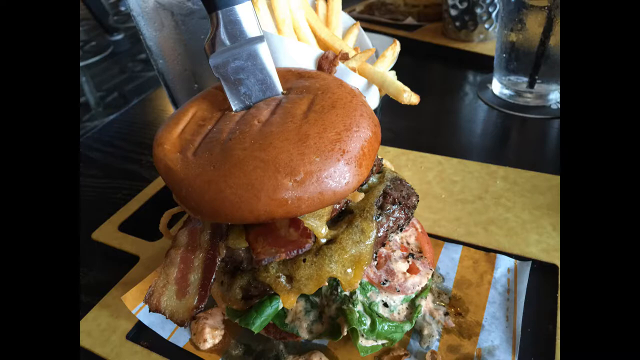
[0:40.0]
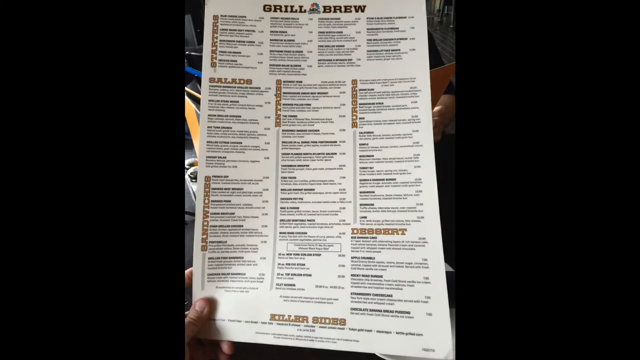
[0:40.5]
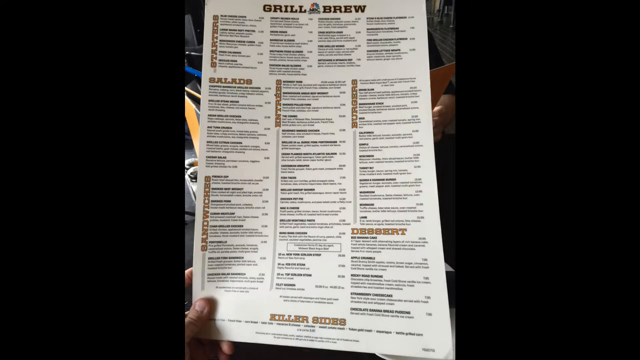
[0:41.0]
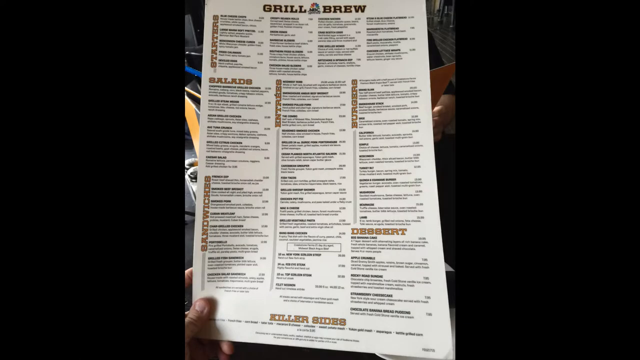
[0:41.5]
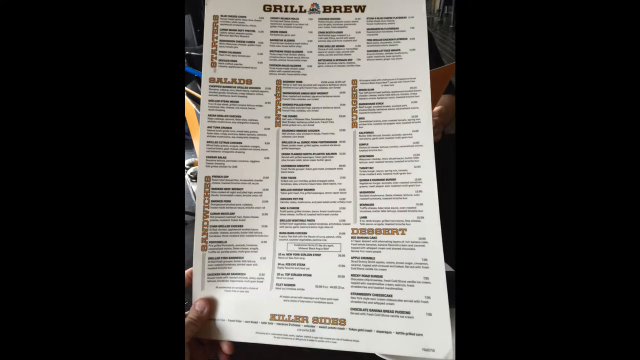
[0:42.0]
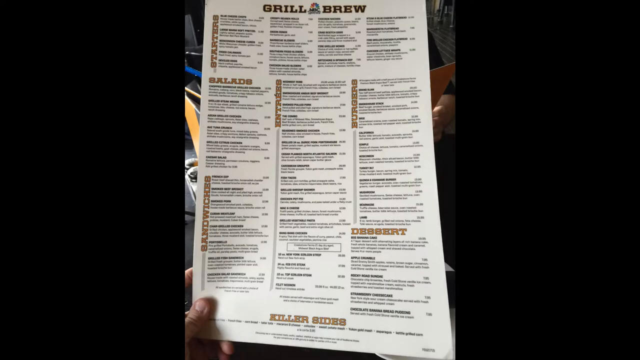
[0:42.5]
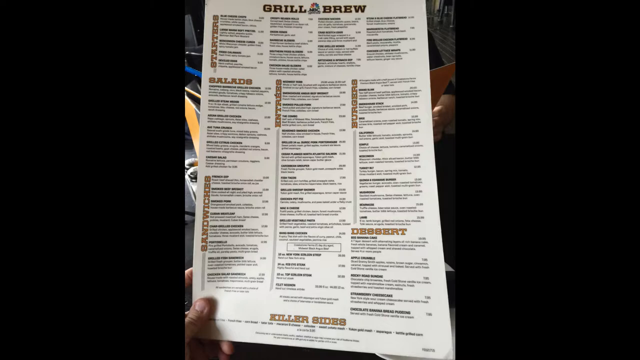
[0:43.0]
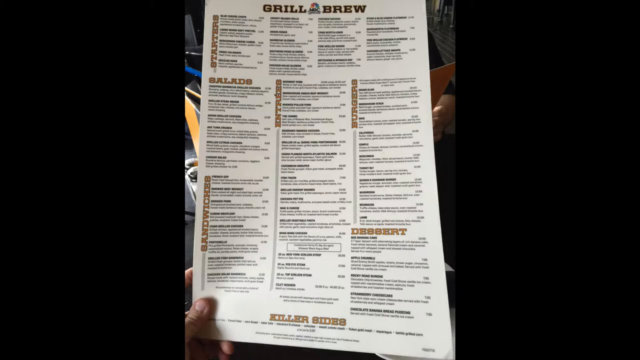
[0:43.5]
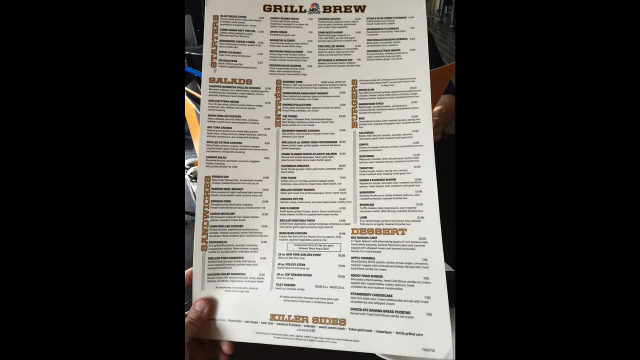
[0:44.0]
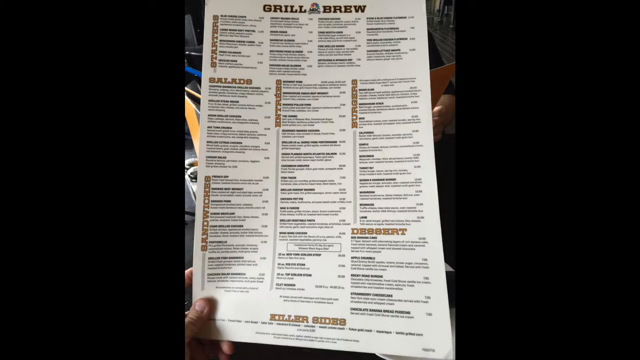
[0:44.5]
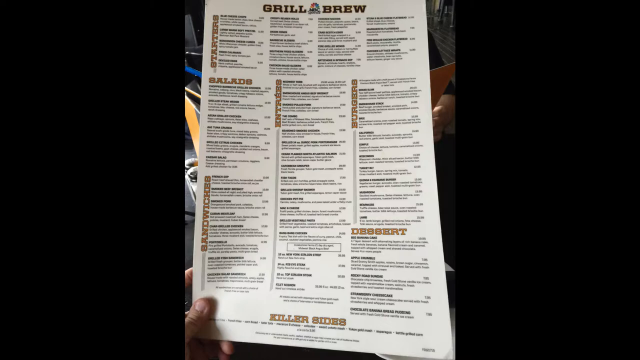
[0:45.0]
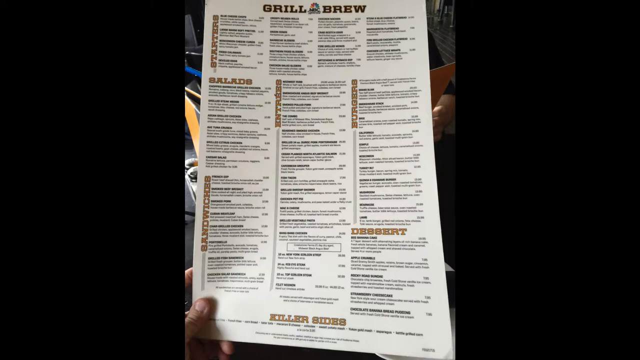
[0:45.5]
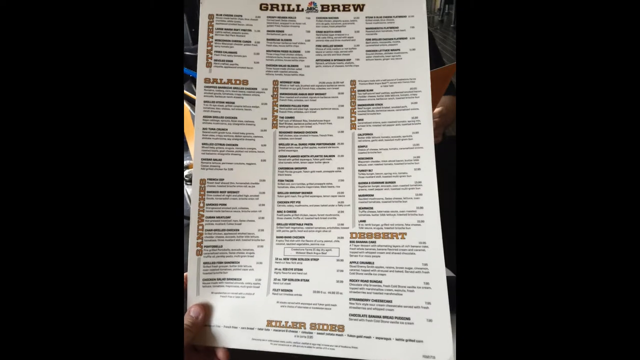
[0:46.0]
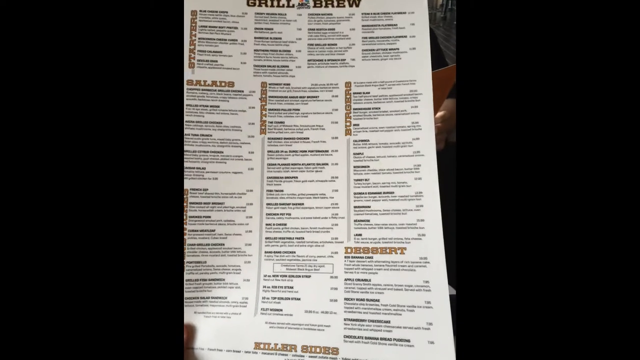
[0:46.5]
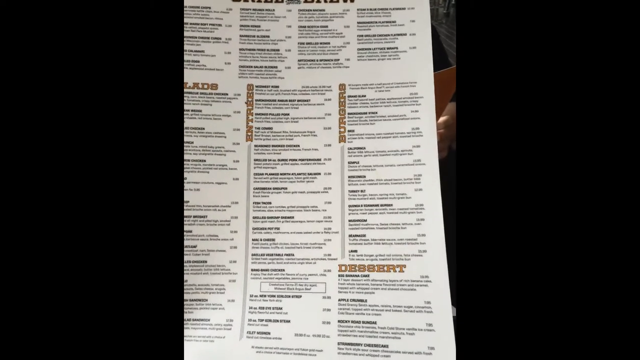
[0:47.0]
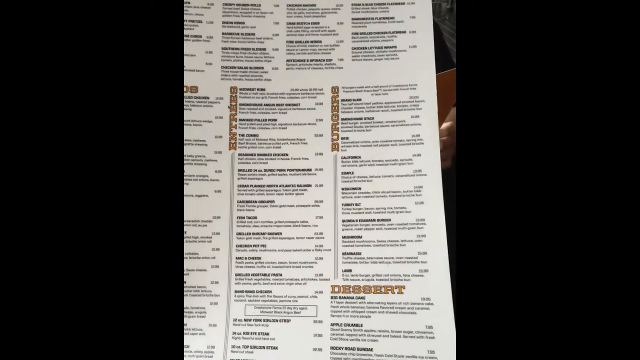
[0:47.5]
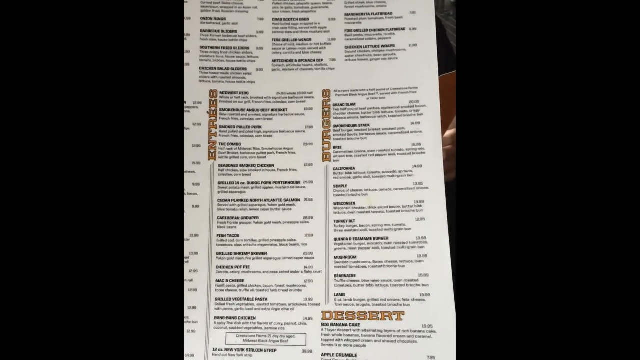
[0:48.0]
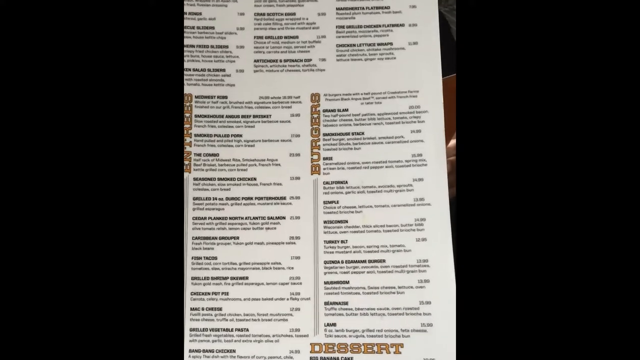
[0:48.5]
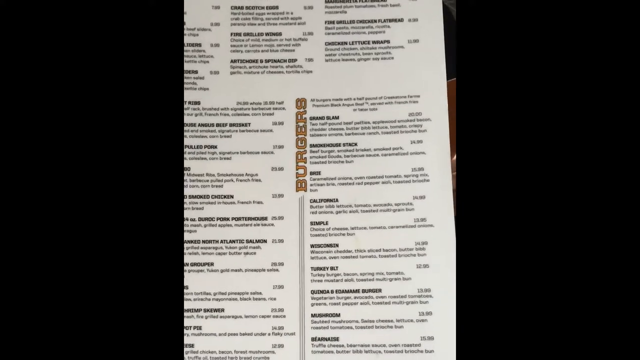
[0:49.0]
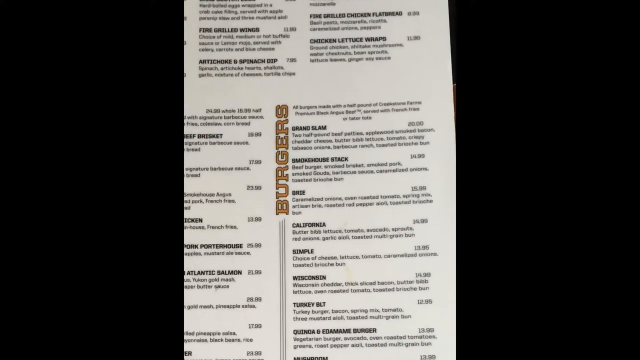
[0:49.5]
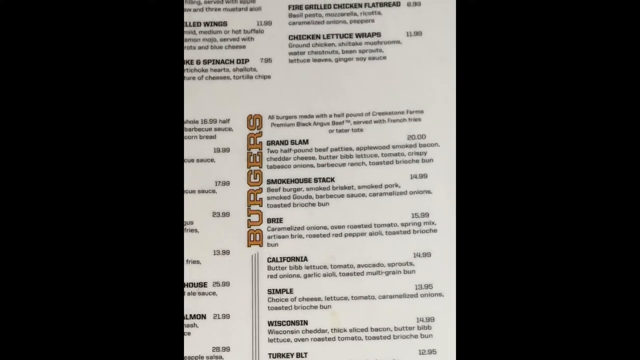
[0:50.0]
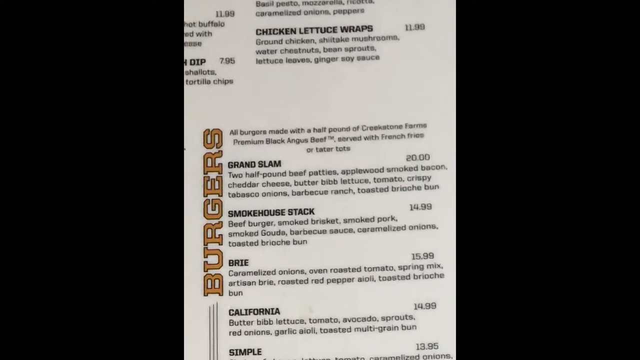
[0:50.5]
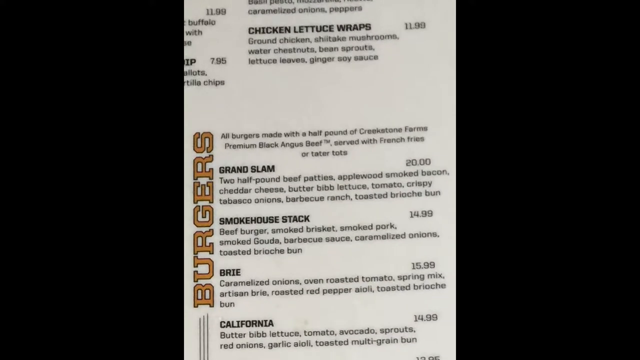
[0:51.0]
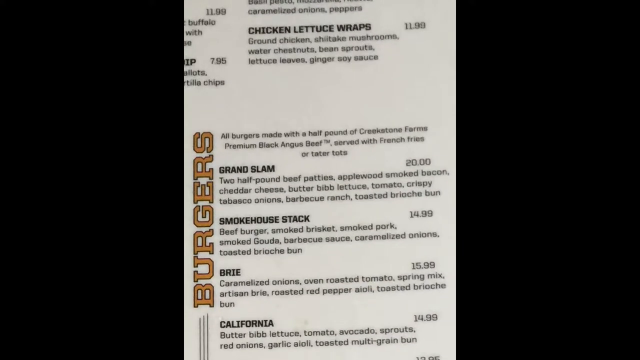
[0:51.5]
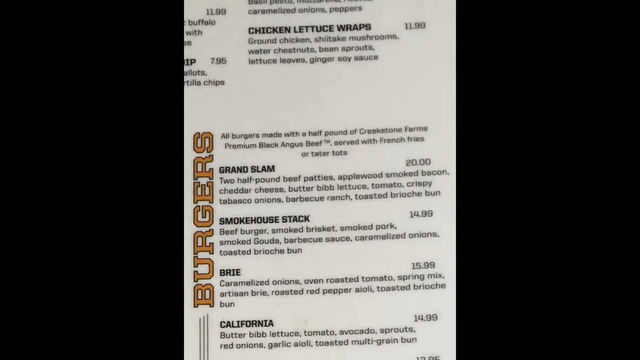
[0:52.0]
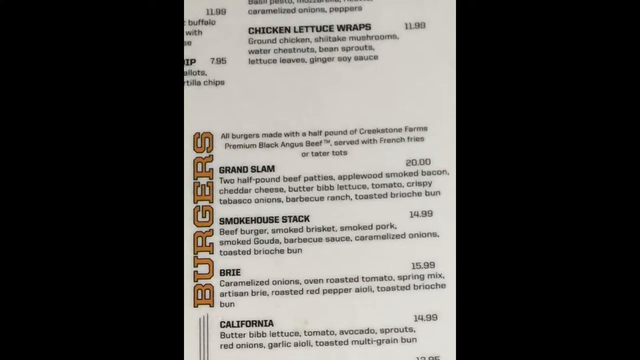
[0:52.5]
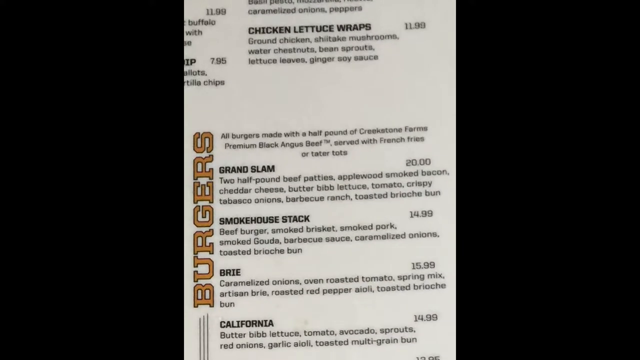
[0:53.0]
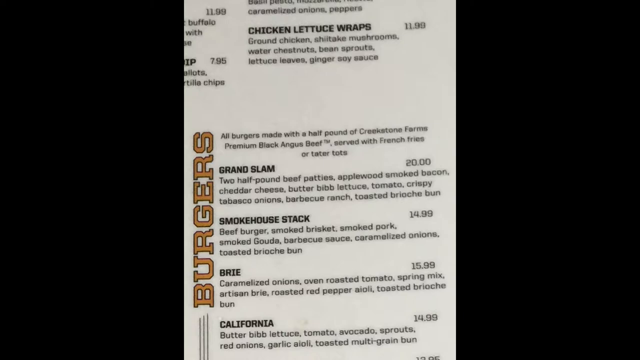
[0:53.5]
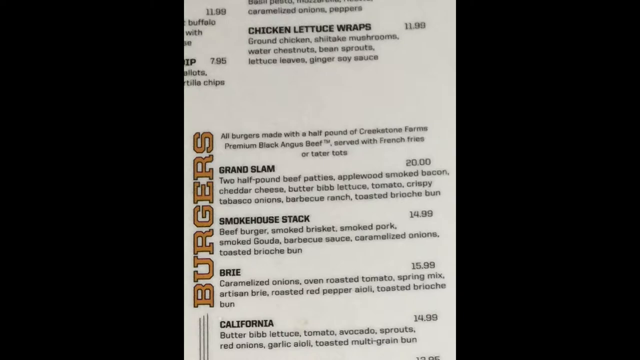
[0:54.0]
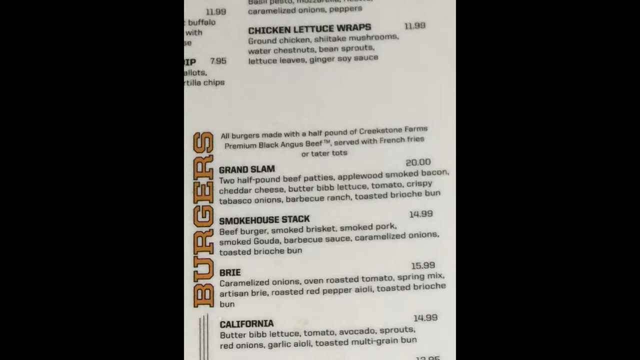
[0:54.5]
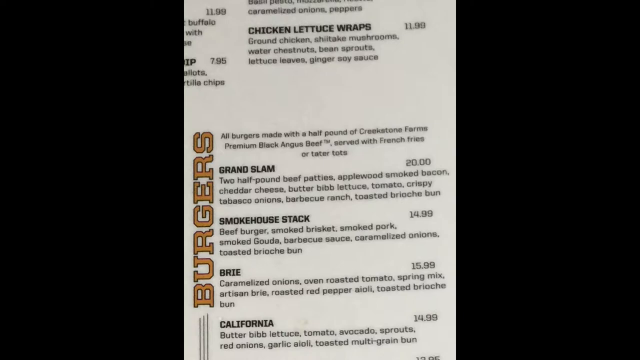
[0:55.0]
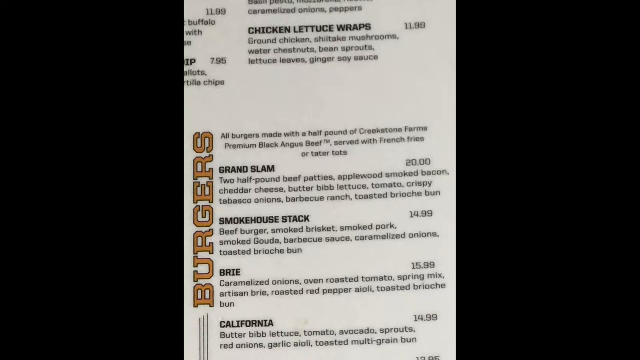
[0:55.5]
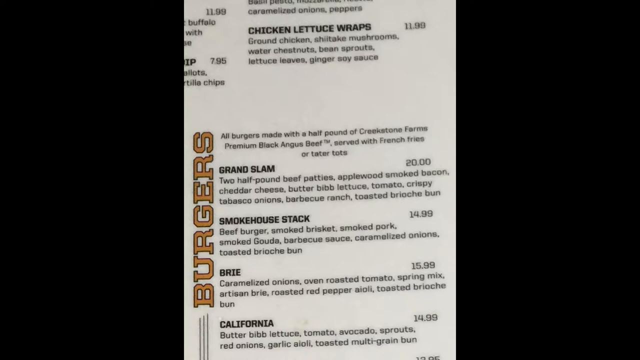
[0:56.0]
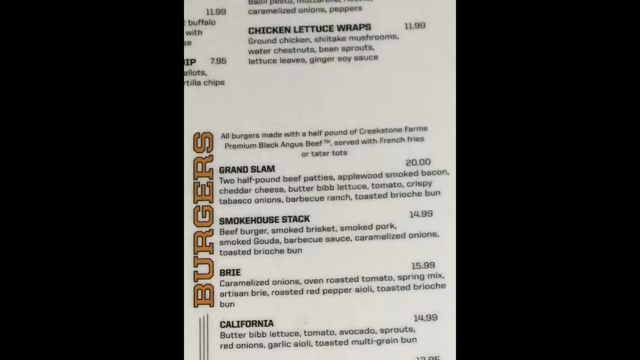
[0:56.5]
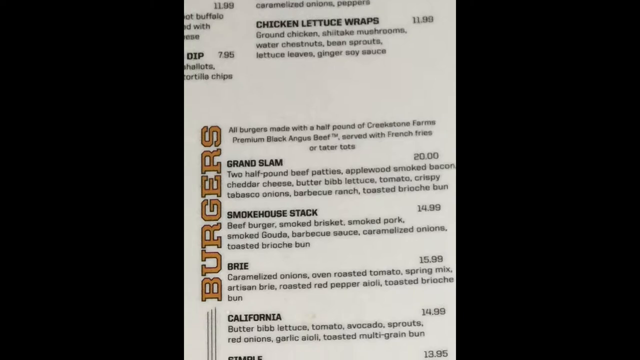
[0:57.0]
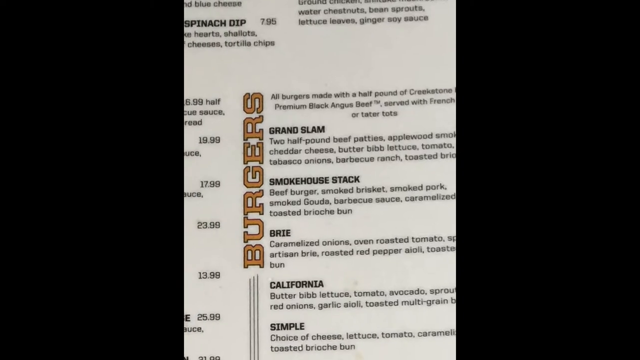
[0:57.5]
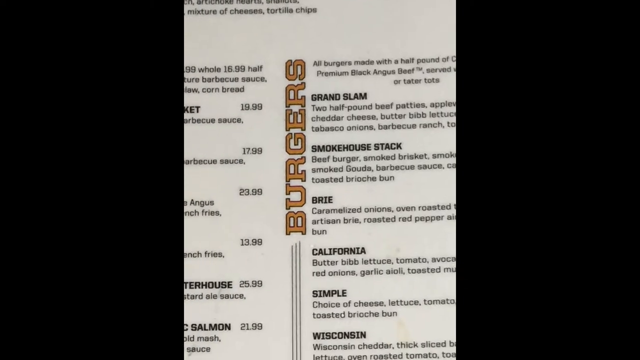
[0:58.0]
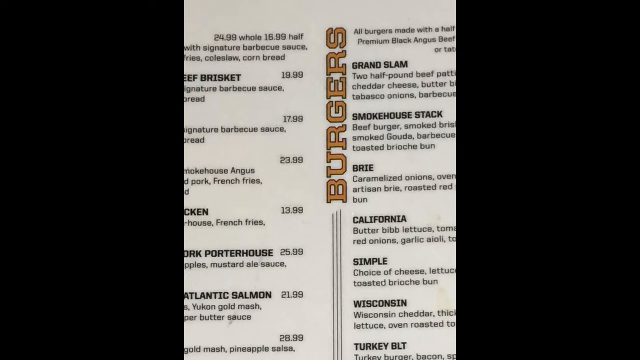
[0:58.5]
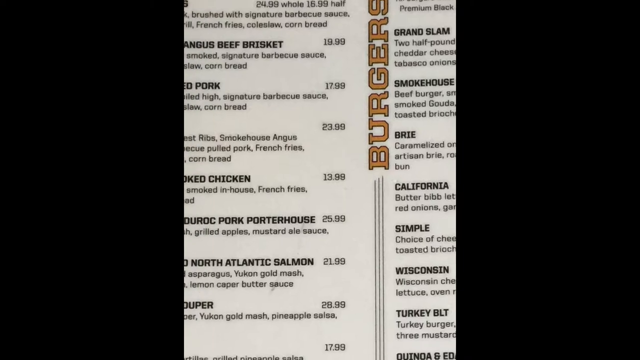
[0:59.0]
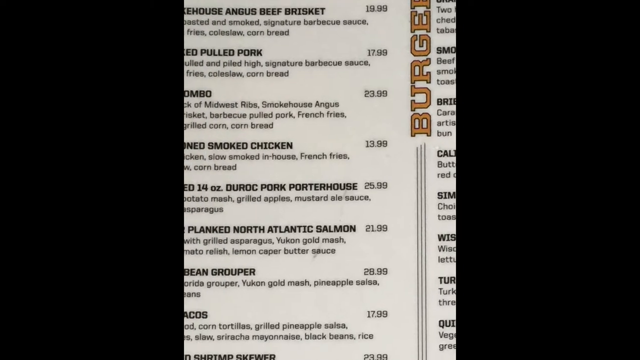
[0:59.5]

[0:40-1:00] A burger is viewed from an angle that is neither side-on nor top-down. It is stacked multiple stories high: a bun on top, then bacon, cheese, a burger patty, tomatoes, and lettuce, all covered in an orange sauce. The part below is out of view, but it looks to be even taller by a good deal. Beneath it is a white and orange striped piece of paper on a black table with yellow outlines. The video then transitions to a menu in the center of the screen, with "Grillbrew" at the top in black capital letters with orange outlines. The main area has many items in three columns, while the very top, probably the appetizers, has four columns. A thumb and index finger are just barely visible in the lower left corner, holding the menu up.